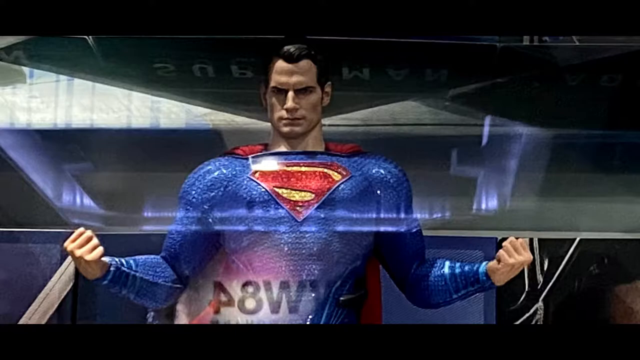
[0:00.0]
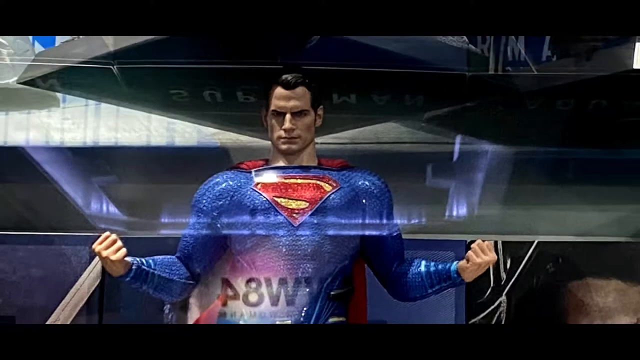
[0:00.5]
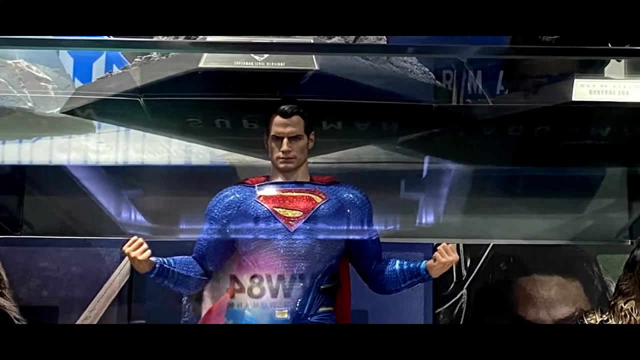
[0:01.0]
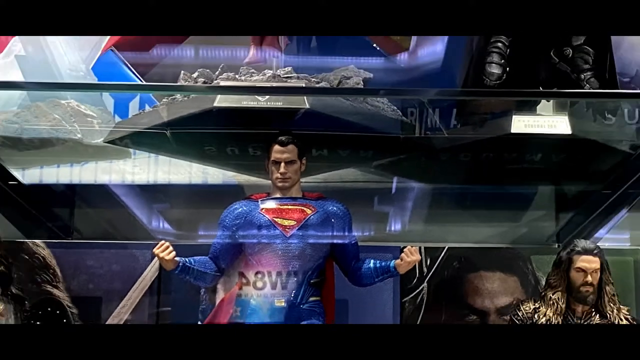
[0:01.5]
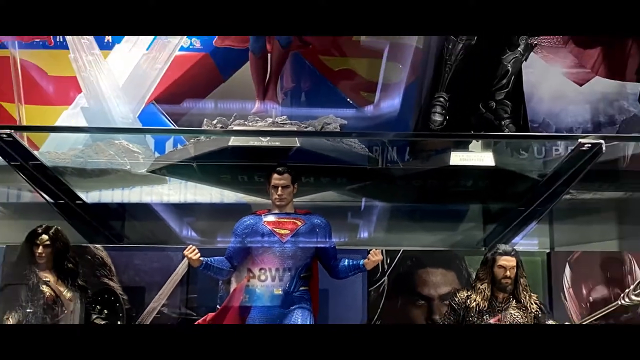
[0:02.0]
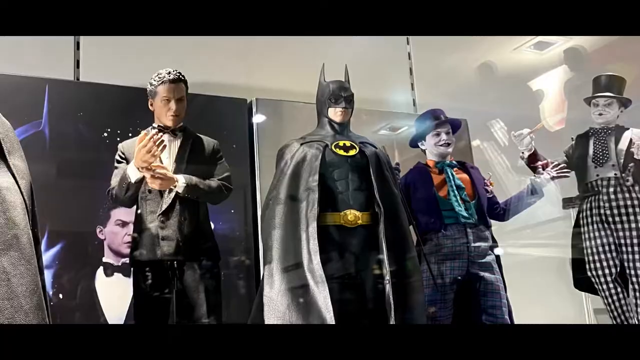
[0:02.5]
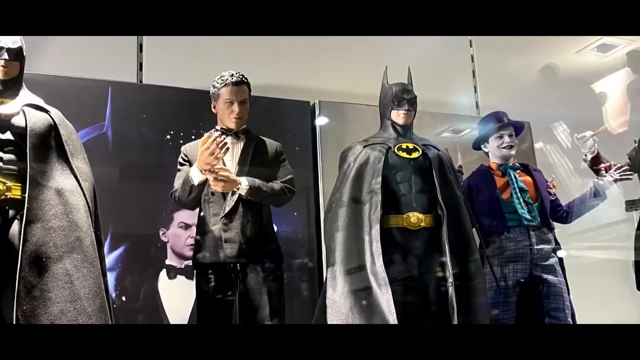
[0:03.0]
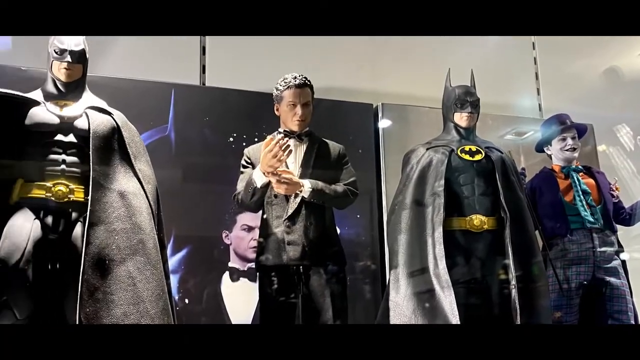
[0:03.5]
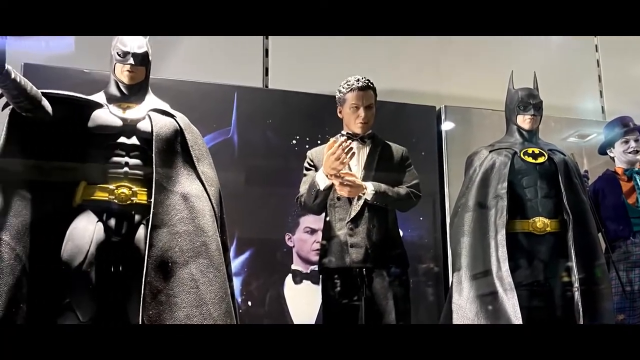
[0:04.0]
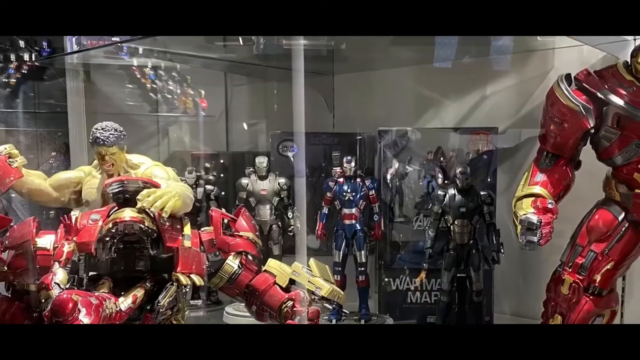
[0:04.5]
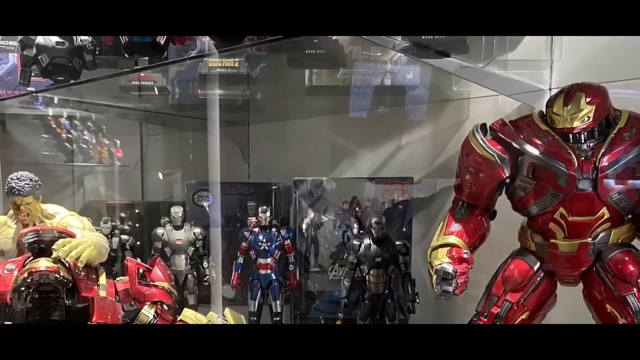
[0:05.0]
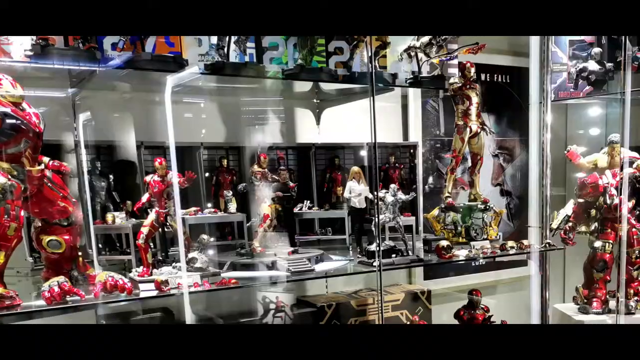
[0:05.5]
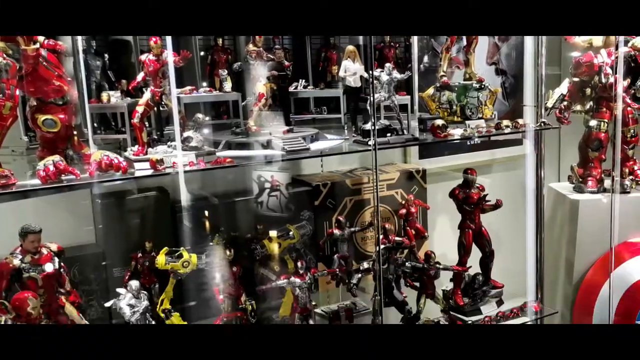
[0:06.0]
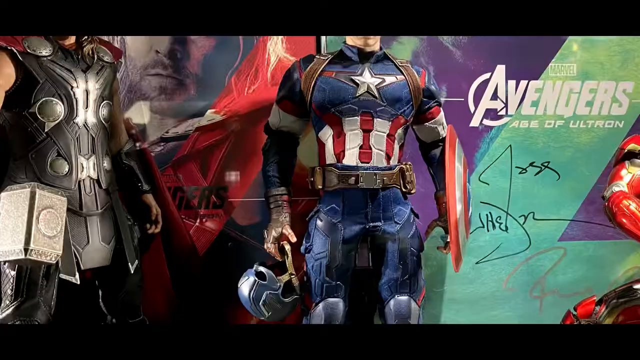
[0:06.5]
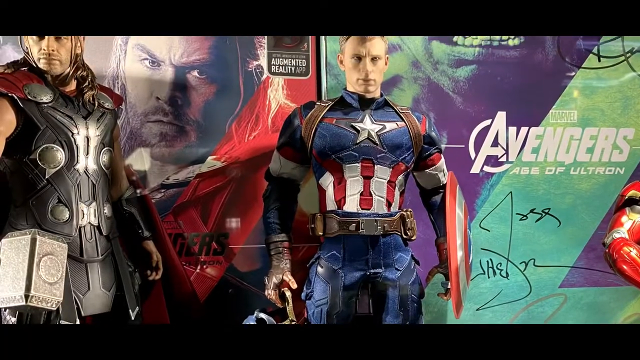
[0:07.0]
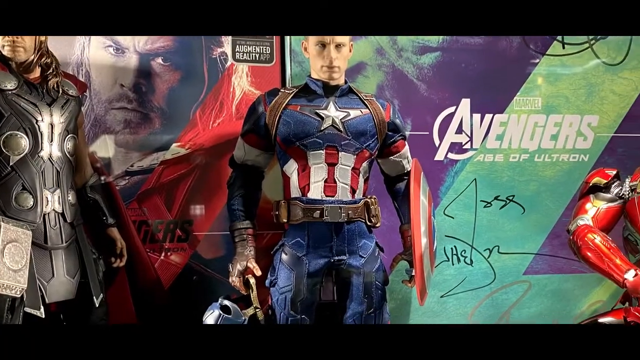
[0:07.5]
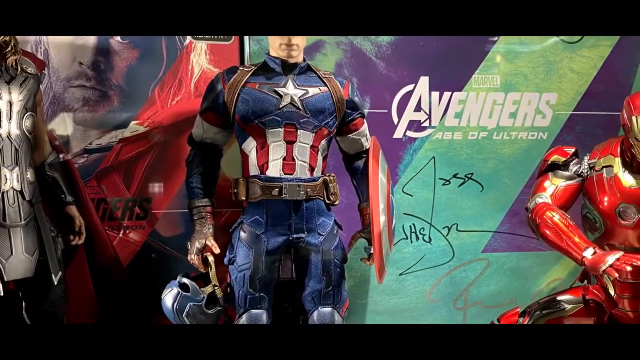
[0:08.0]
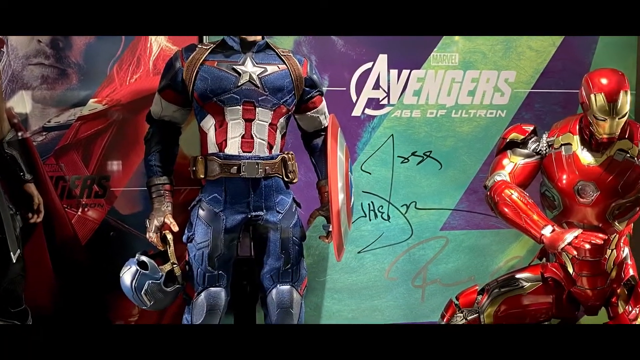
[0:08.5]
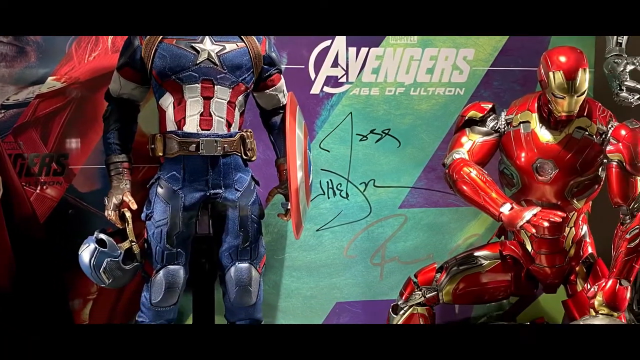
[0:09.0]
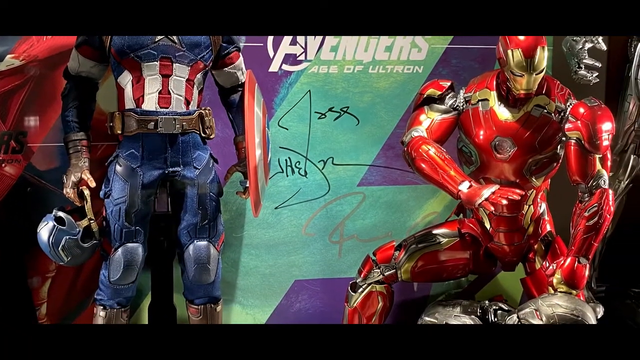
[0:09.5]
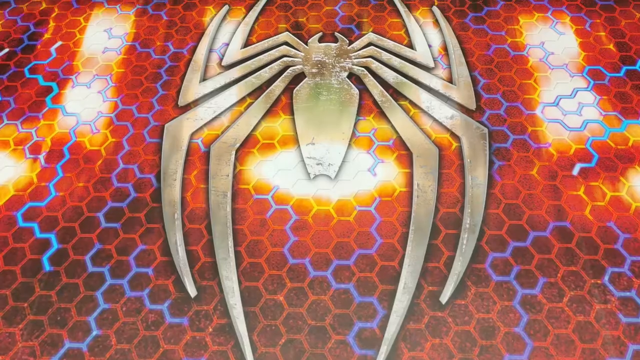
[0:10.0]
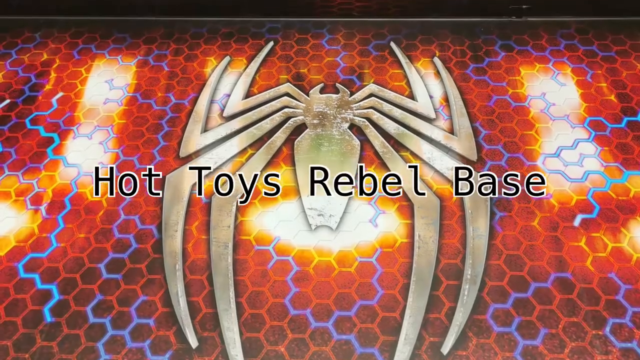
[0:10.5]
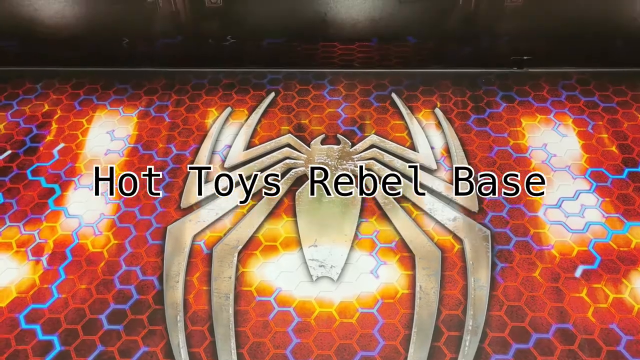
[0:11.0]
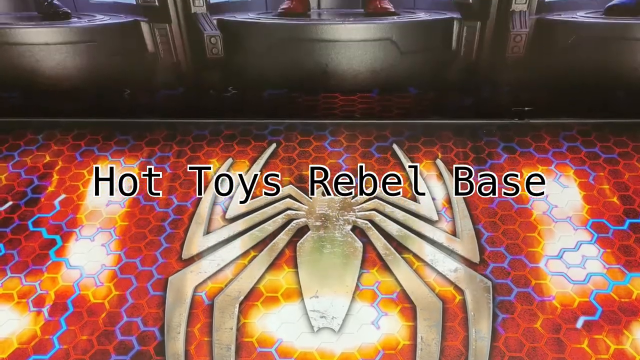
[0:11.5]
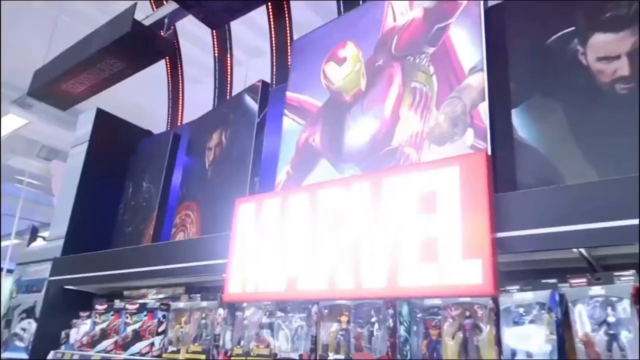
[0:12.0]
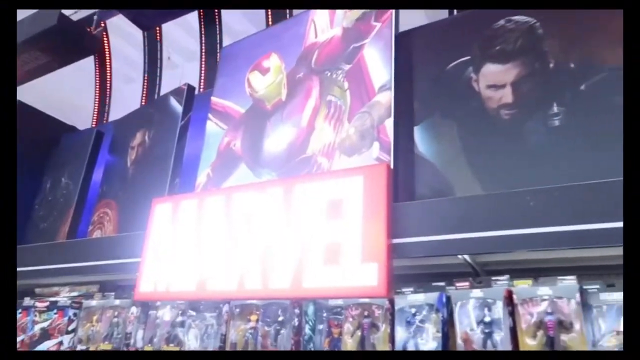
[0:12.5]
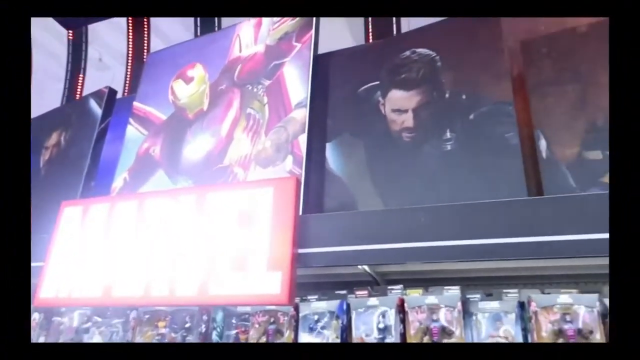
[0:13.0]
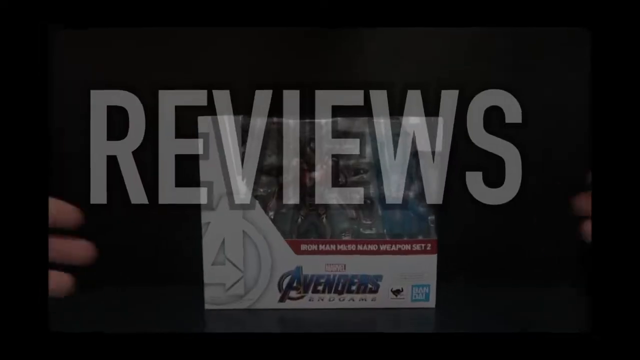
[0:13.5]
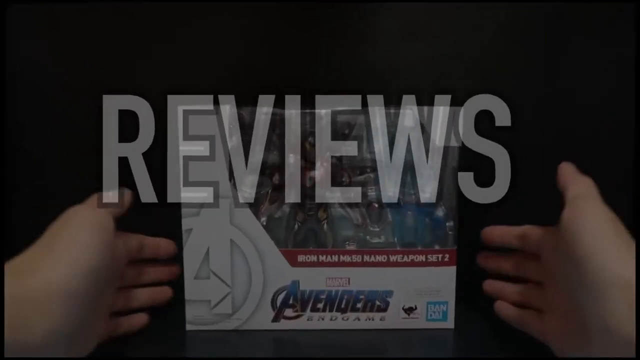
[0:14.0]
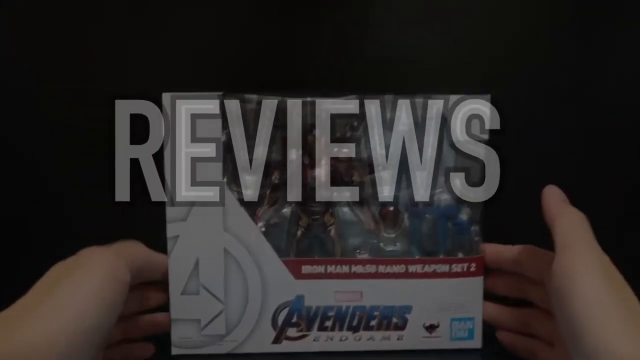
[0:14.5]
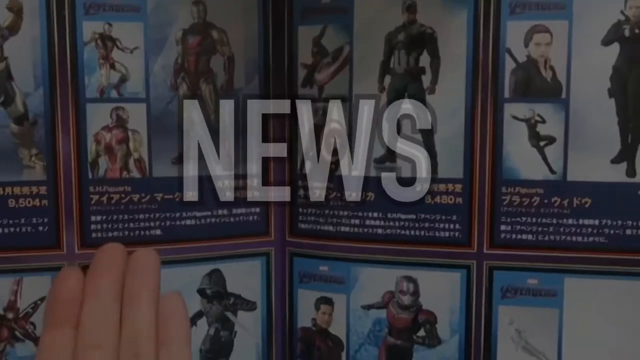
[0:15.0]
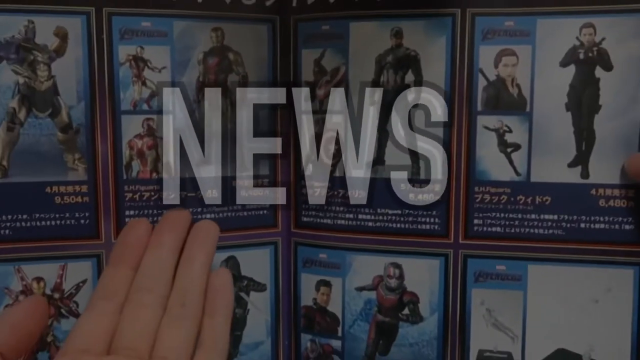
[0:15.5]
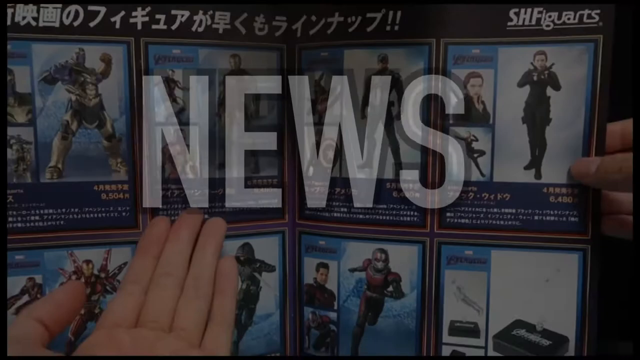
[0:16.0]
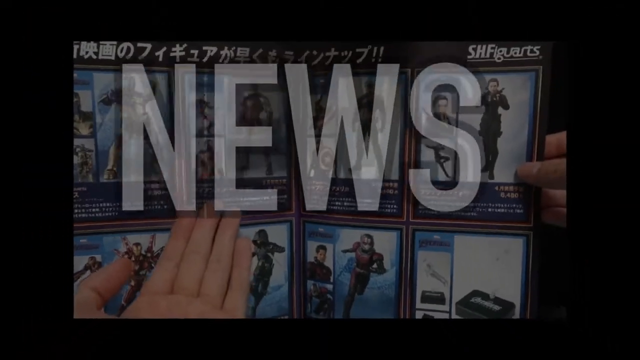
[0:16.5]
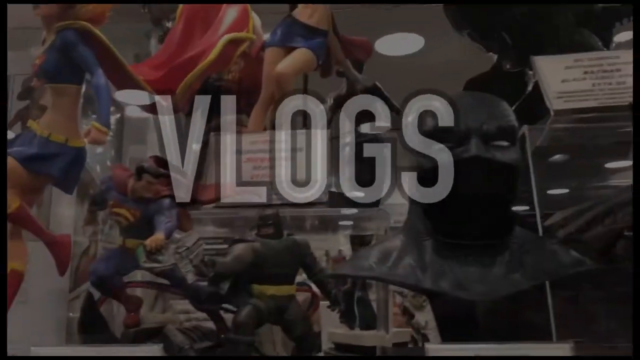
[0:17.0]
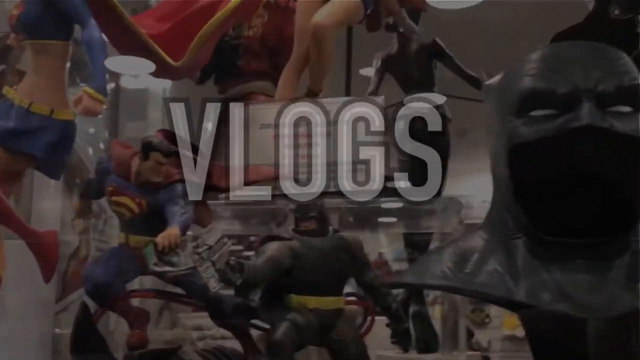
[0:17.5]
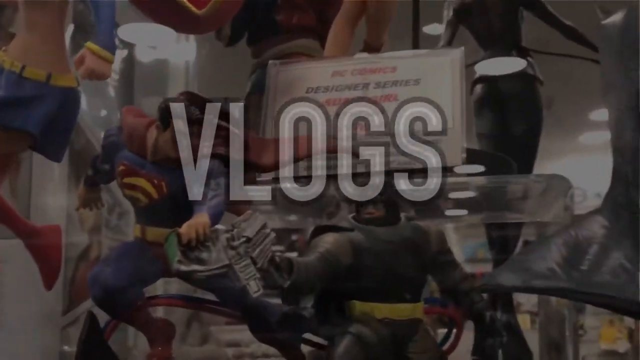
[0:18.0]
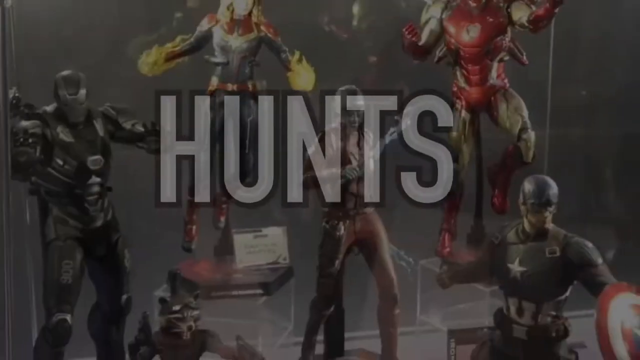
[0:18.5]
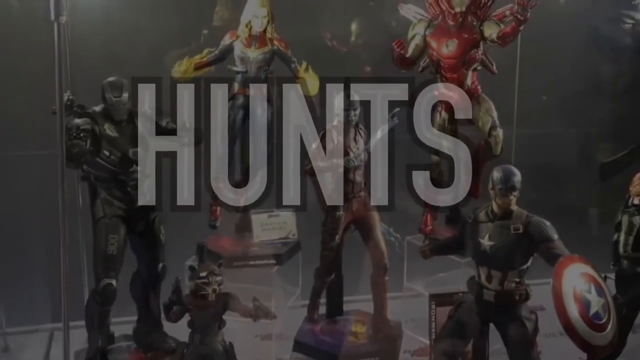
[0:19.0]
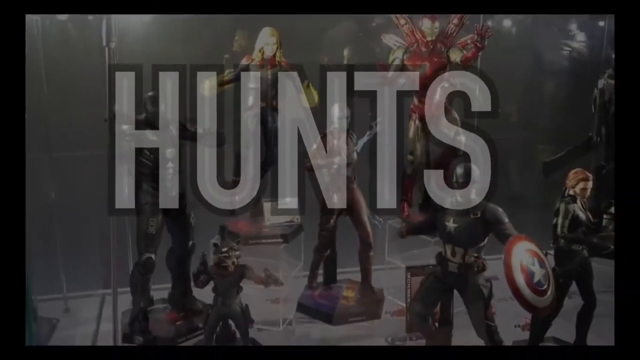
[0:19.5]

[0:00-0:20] The video appears to showcase a toy store and/or pop culture store or expo, showing different photos and views of pop culture items, especially Marvel-related figures, statues and collectibles. There is signed memorabilia. The name Hot Toys Rebel Base is shown, followed by what it offers: reviews, news, vlogs, hunts and expos. Photos show figurines and collectibles inside glass cases, including Superman, Batman and other DC characters, as well as statues and Marvel characters, especially Iron Man and the Avengers. The video cuts through photos of the store itself, showing the many figurines and collectibles it has, and shows a preview of what looks to be videos of the reviews and vlogs.